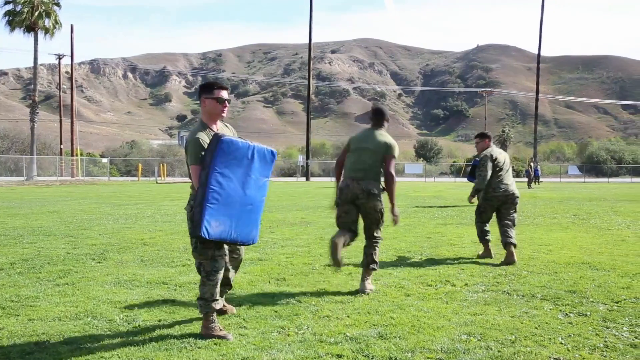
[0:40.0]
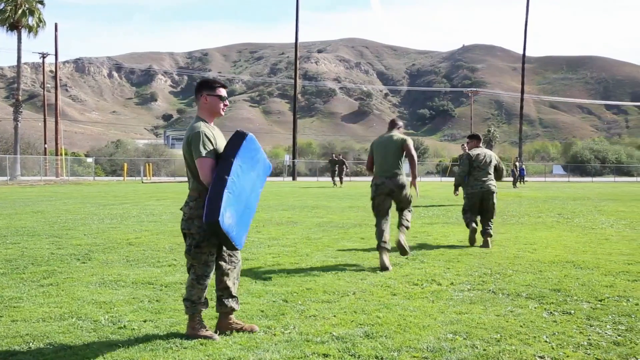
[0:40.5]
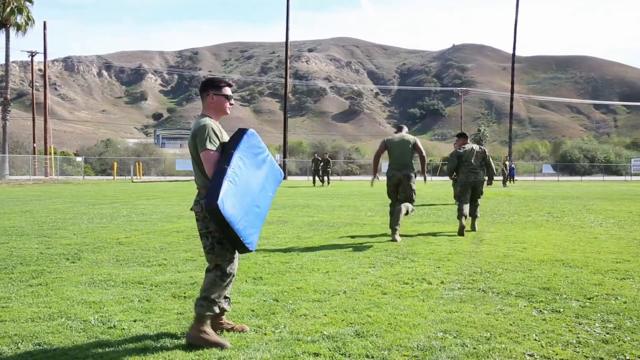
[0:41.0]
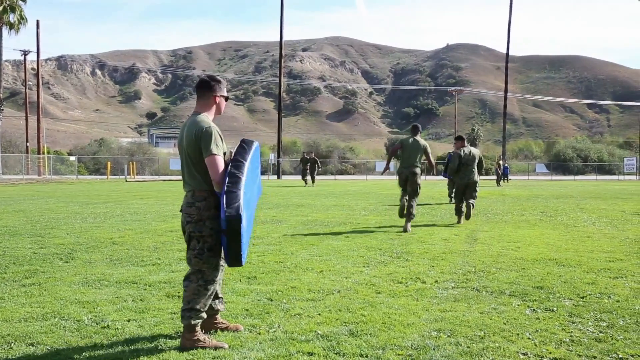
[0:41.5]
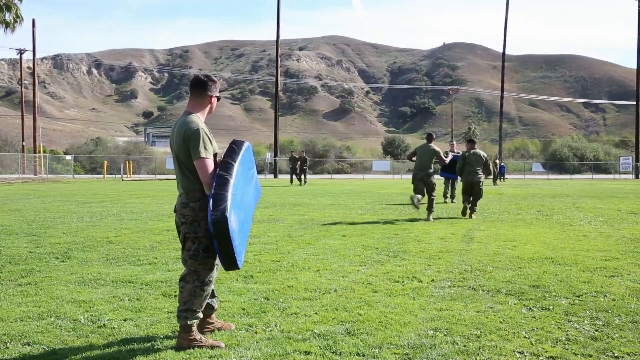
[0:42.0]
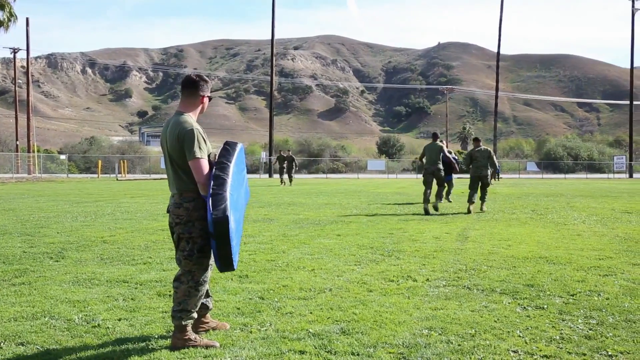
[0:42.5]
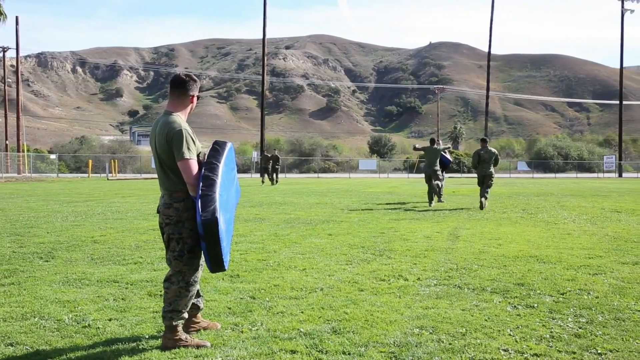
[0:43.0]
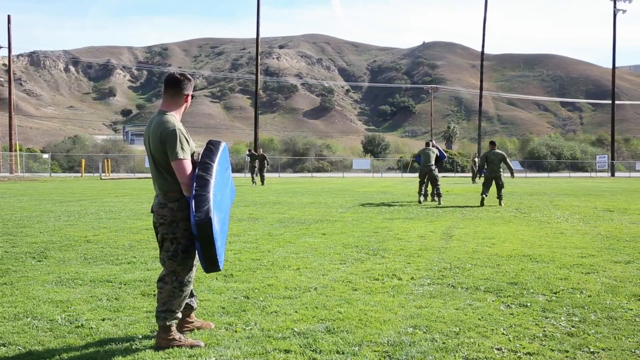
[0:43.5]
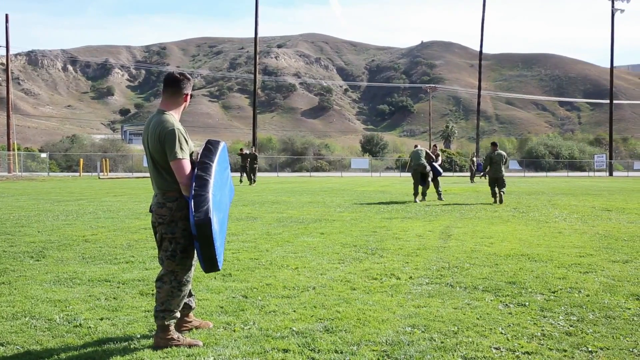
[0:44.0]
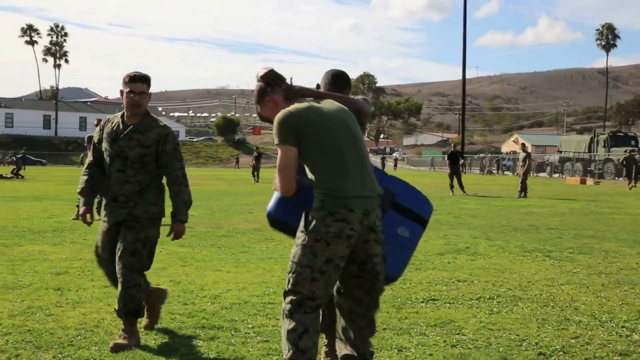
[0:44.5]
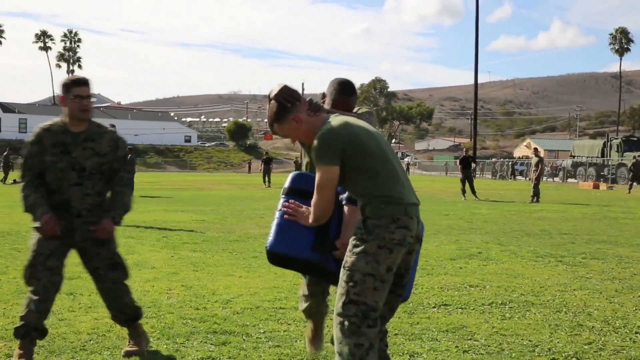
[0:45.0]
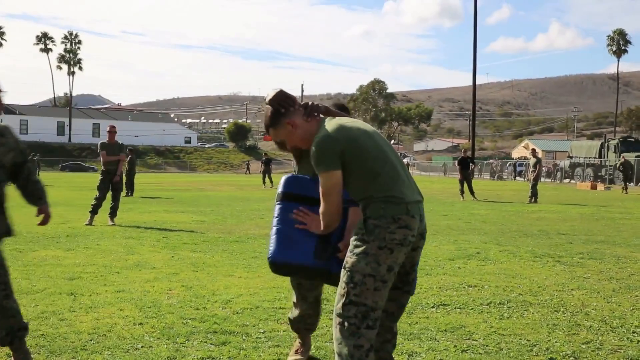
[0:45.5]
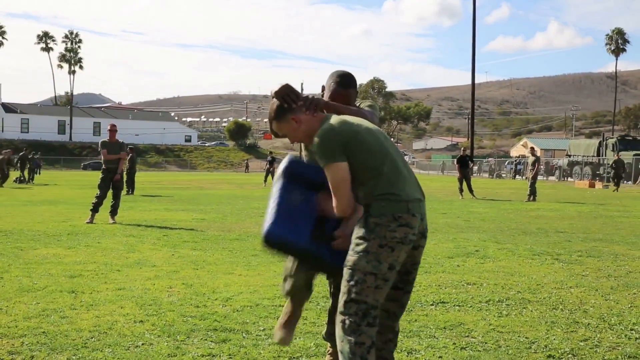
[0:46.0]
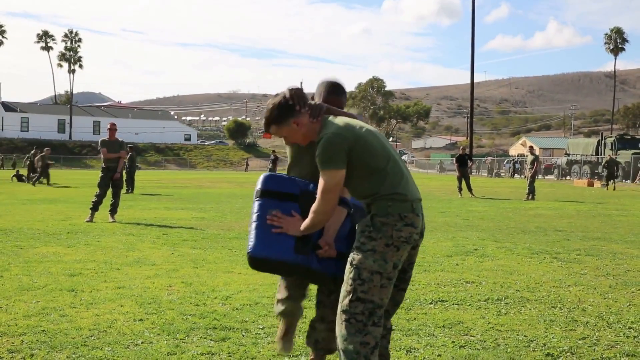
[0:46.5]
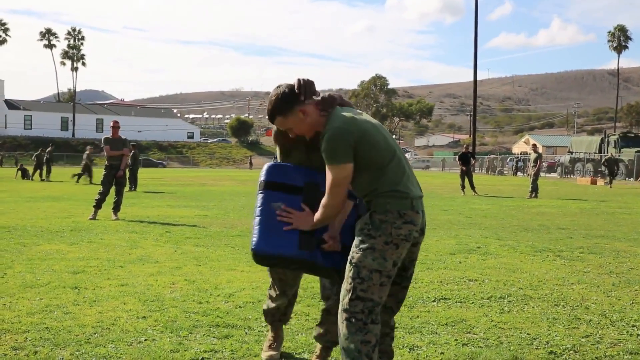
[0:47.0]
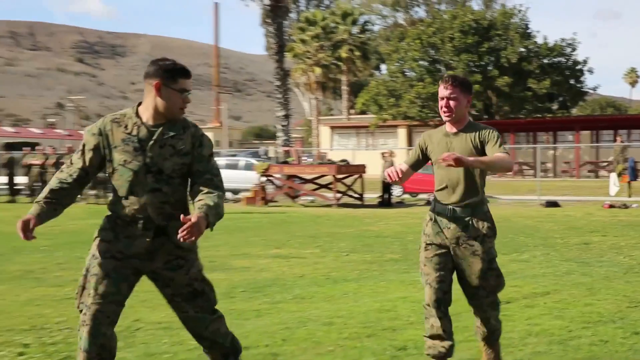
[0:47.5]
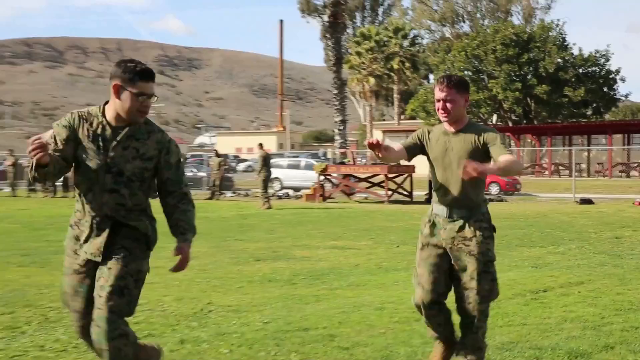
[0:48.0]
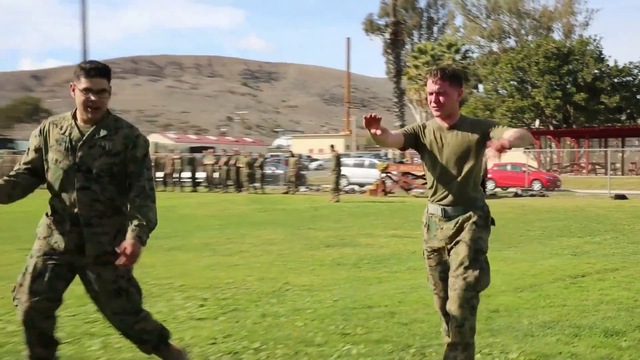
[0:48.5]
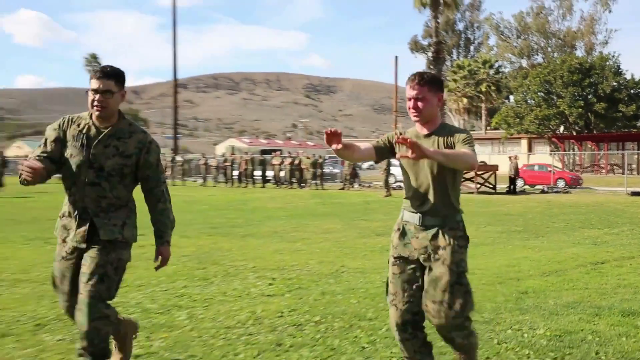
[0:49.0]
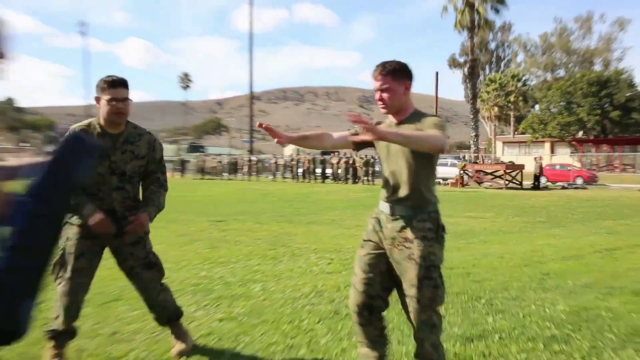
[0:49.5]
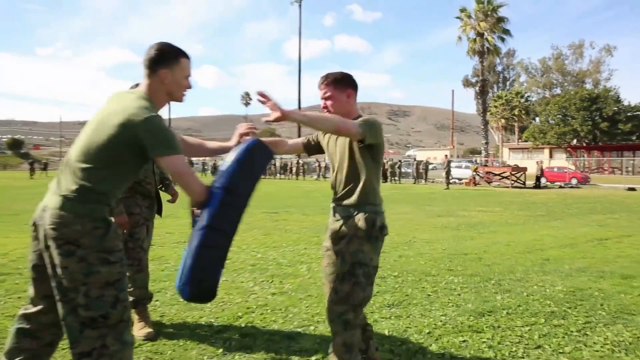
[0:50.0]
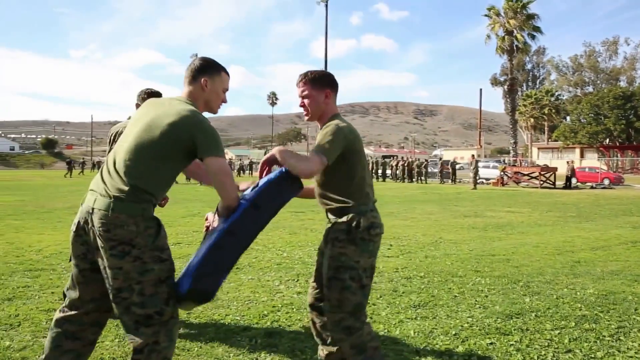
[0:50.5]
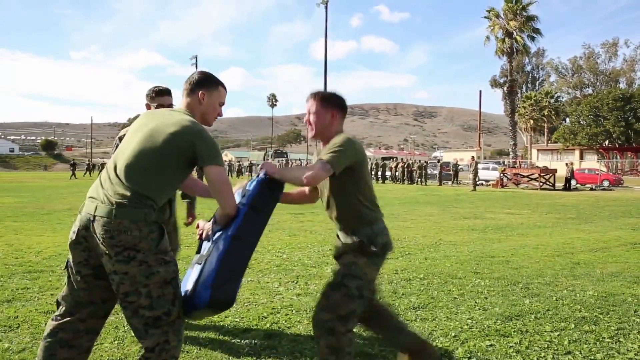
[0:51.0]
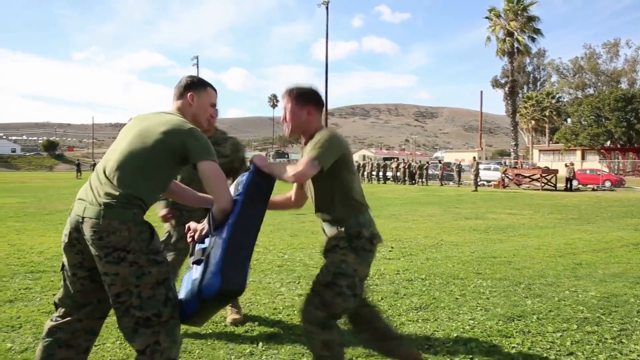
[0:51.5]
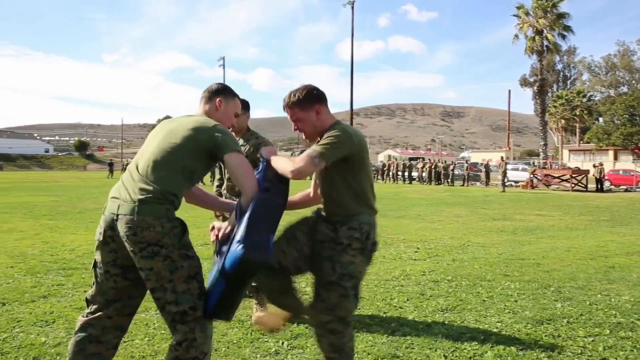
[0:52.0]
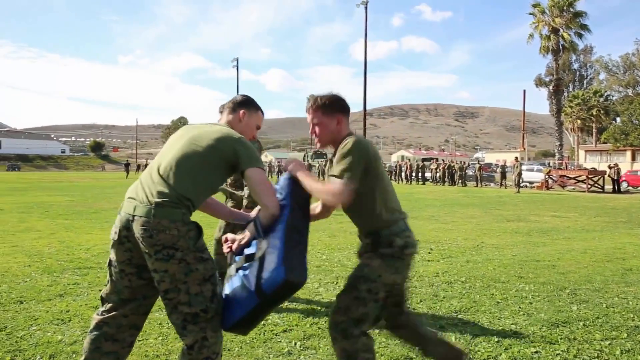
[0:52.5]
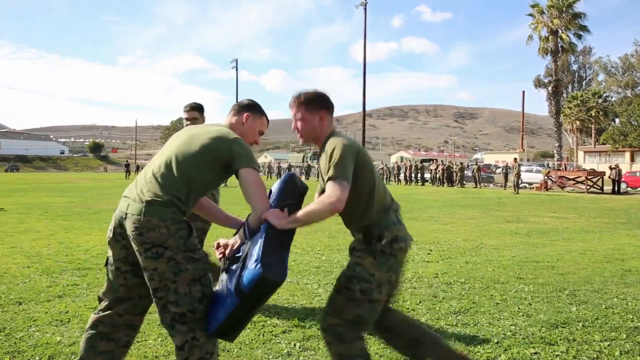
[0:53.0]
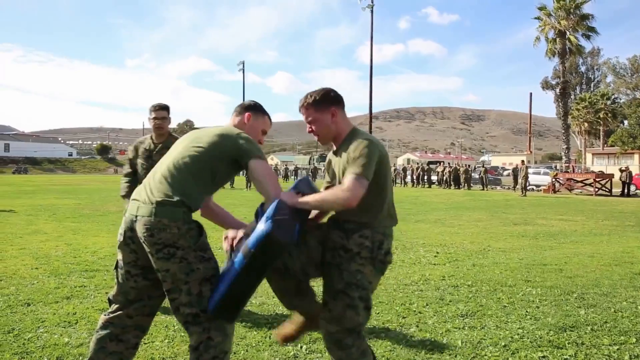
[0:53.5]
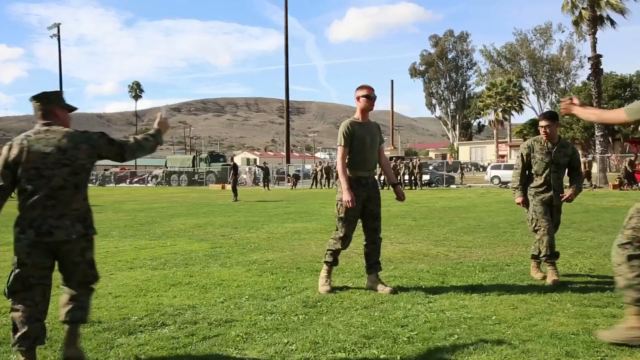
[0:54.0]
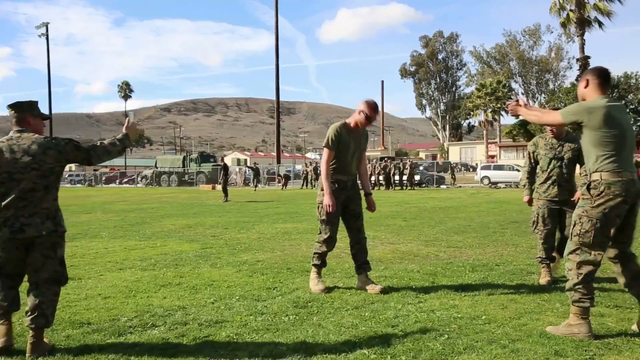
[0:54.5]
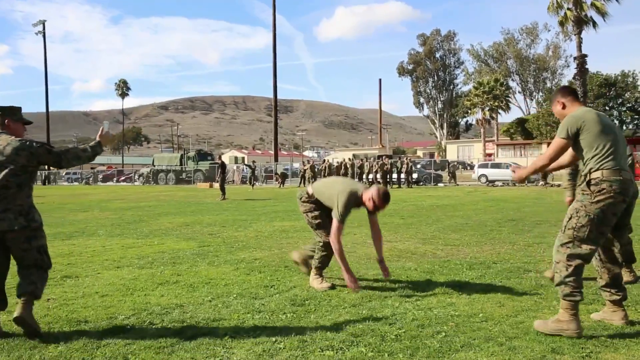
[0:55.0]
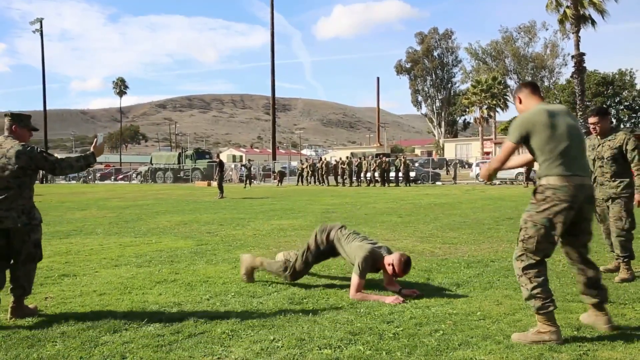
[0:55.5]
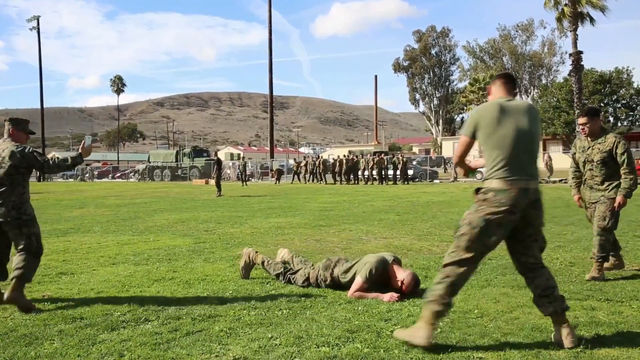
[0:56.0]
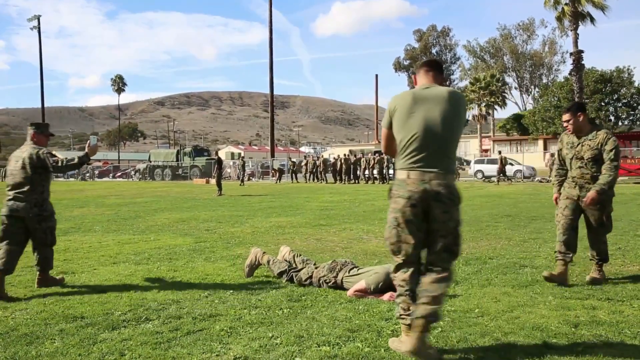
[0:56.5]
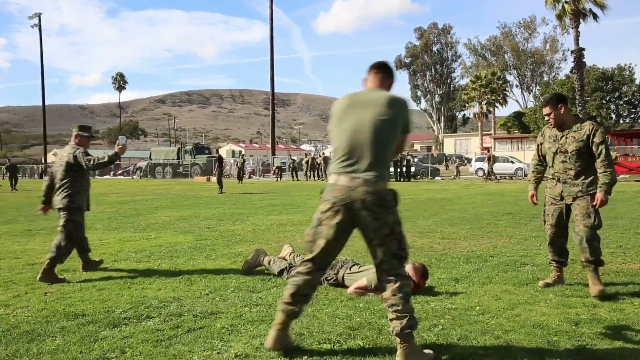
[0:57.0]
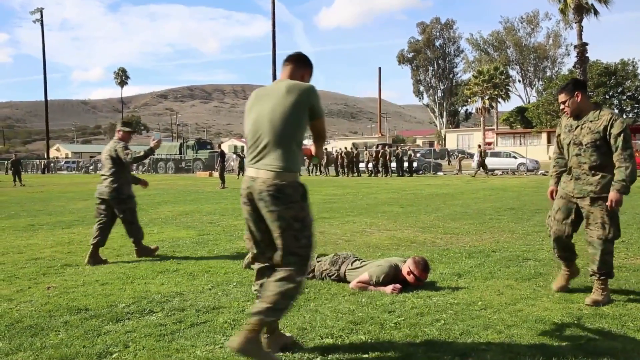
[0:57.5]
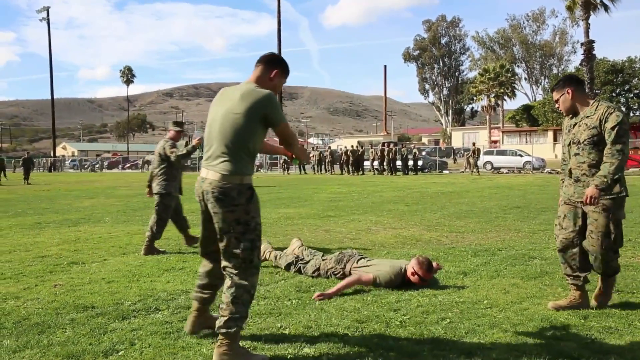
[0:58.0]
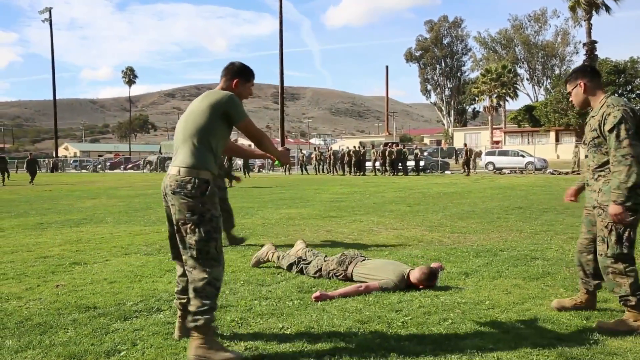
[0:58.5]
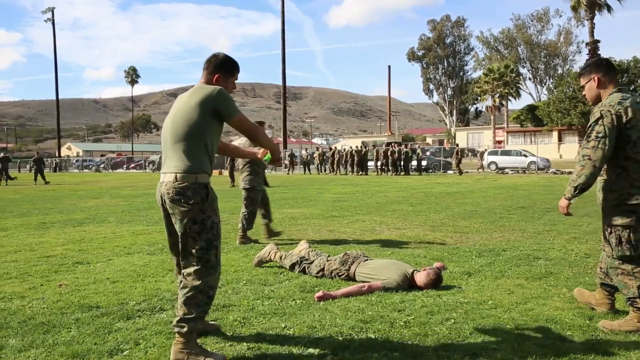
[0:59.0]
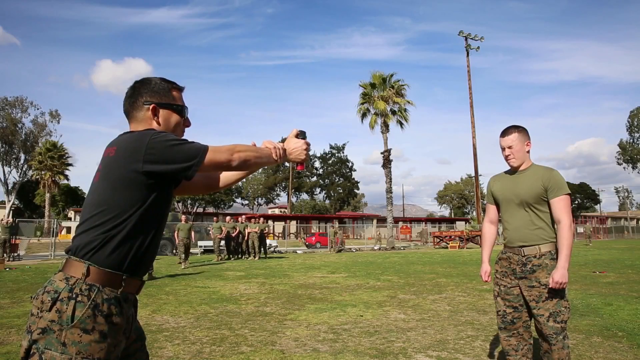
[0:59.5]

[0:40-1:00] The recruits appear to be doing some sort of fight training. After punching the mat held up by another recruit, the recruit runs to another station, where another recruit is using a mat, shown from another angle. Another recruit, red in the face, runs from the right toward the center; on his turn, he lifts his right knee and knees the person holding the mat to block the blows. In another scene, 20 or more recruits are in a line in the back doing one activity. In the foreground are four Marines: one who looks like a commander, another who is standing, another recruit, and one on the ground in a plank position who then lies supine on the ground. In the background there is what looks like a palm tree, along with other trees, and the mountain range is in the back; the grass on the field is green. The recruits run around the field to different stations, exerting a lot of physical effort. One recruit looks like his eyes are red, perhaps from the station where recruits are sprayed in the eyes; his hands are out as if running blindly, and it looks like it is difficult for him to see.